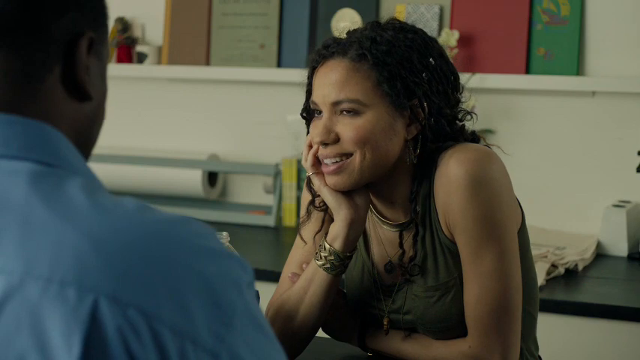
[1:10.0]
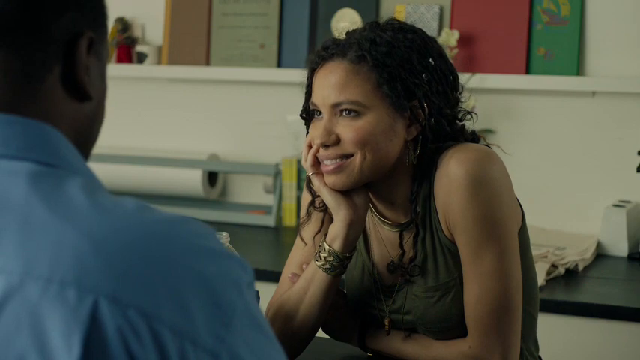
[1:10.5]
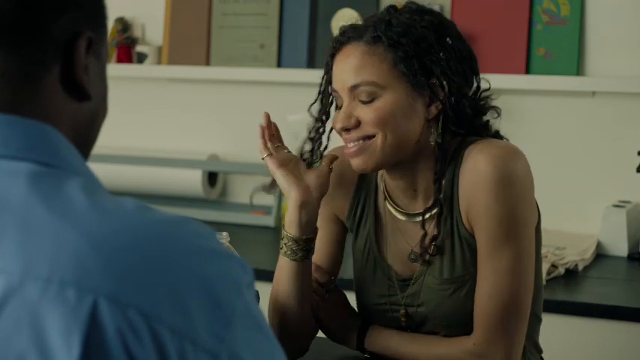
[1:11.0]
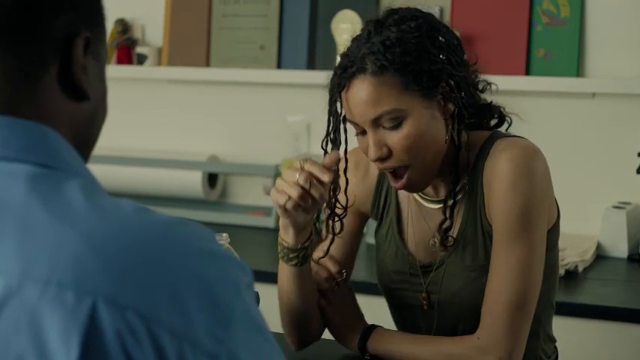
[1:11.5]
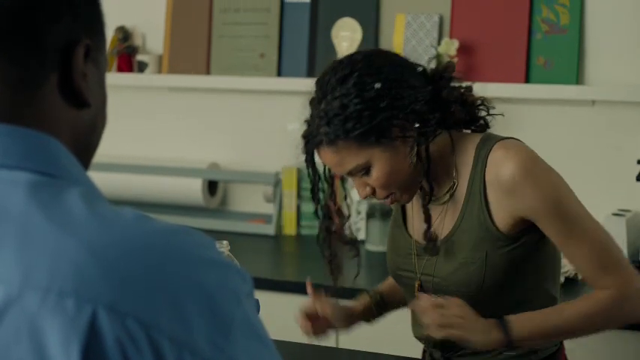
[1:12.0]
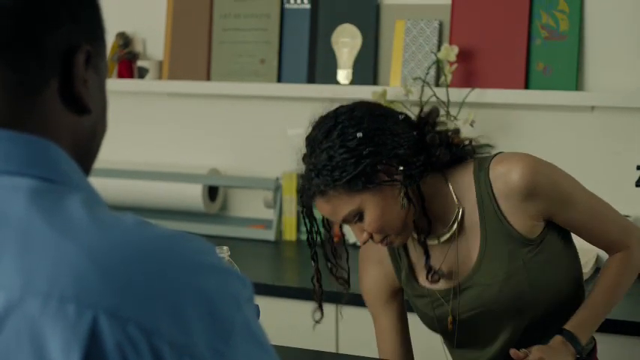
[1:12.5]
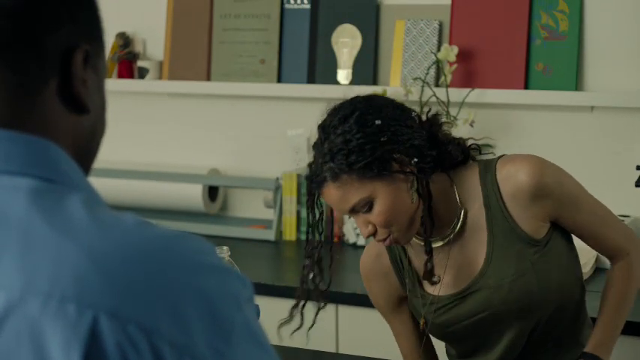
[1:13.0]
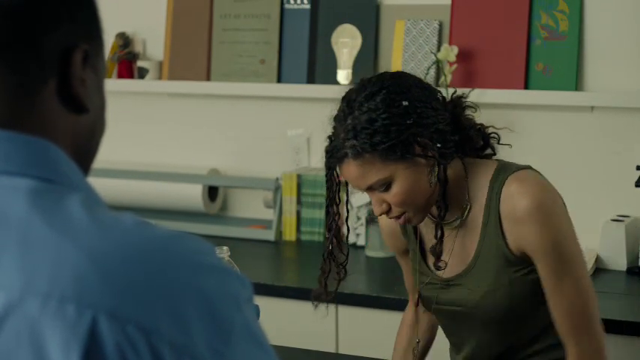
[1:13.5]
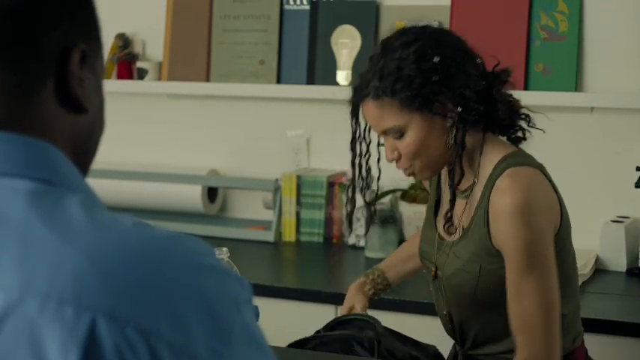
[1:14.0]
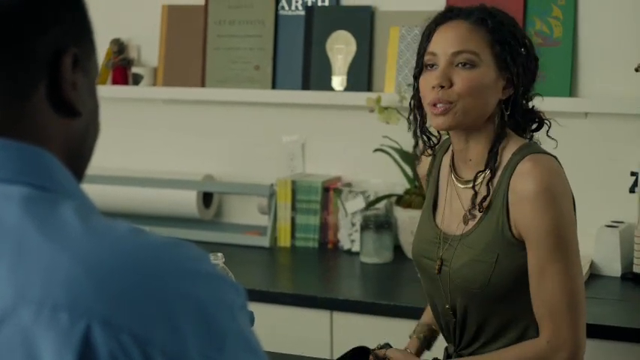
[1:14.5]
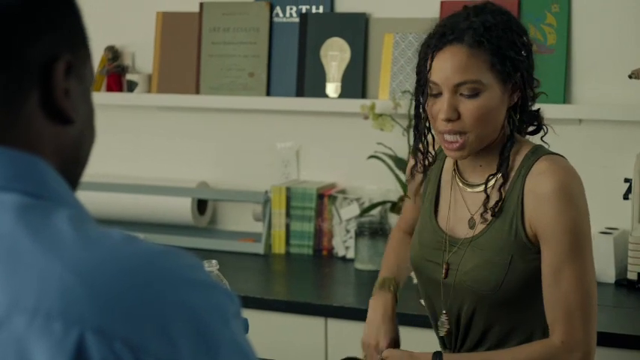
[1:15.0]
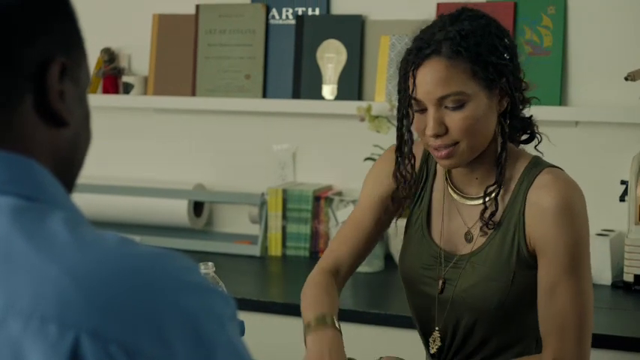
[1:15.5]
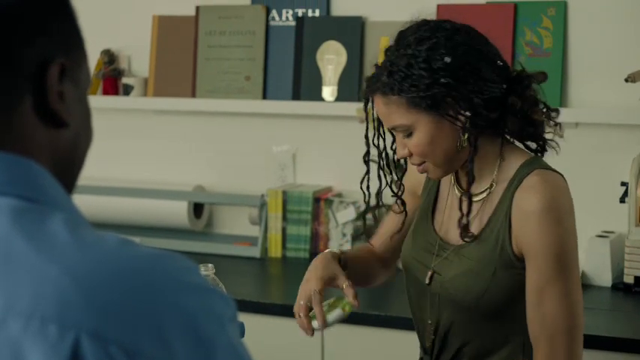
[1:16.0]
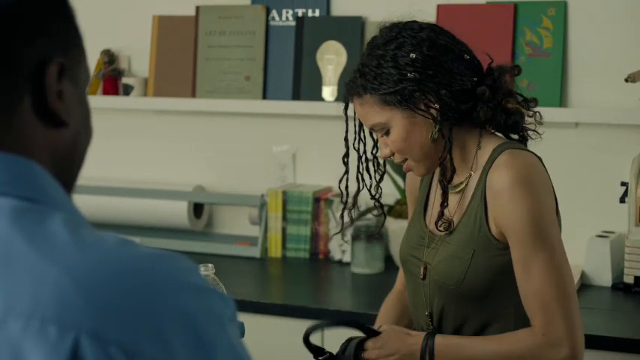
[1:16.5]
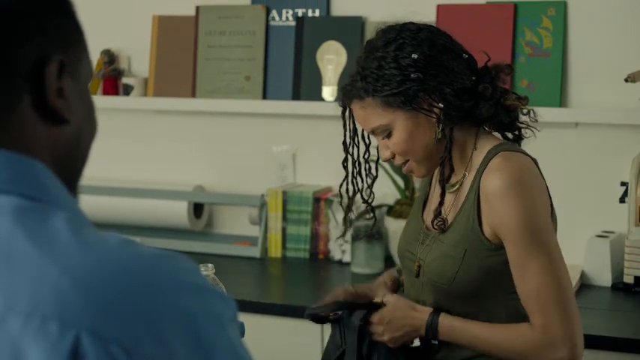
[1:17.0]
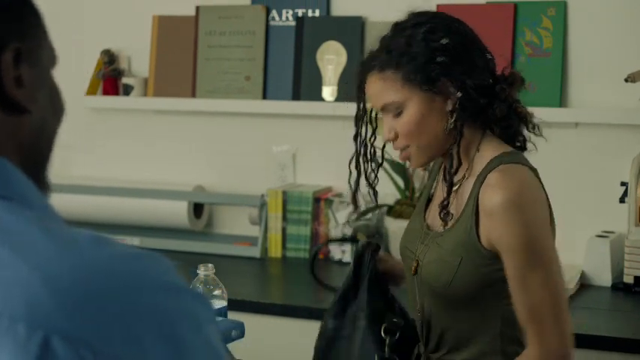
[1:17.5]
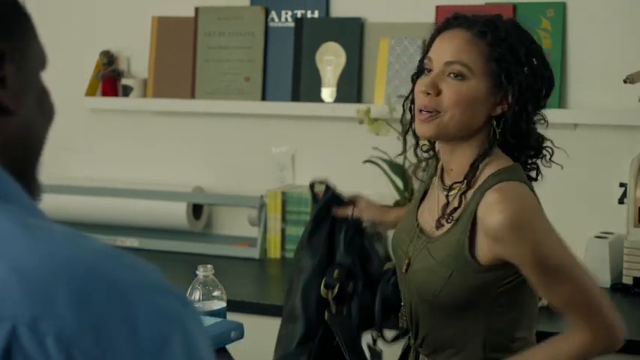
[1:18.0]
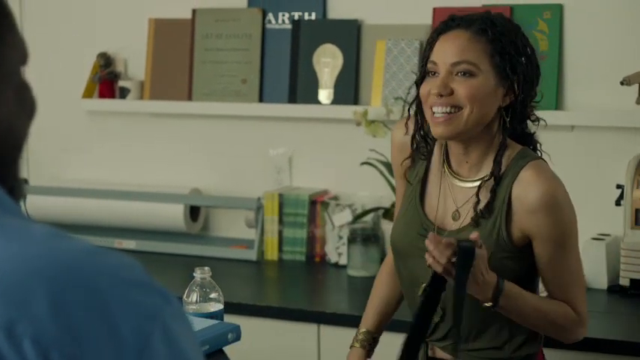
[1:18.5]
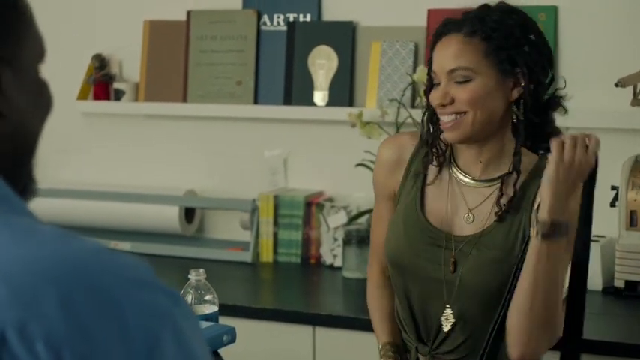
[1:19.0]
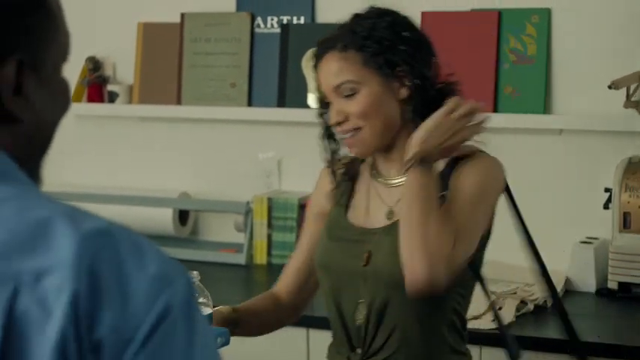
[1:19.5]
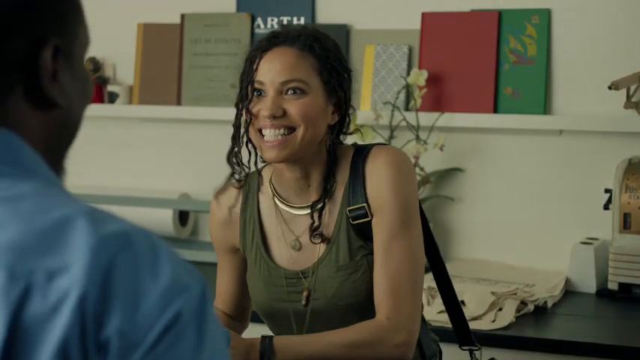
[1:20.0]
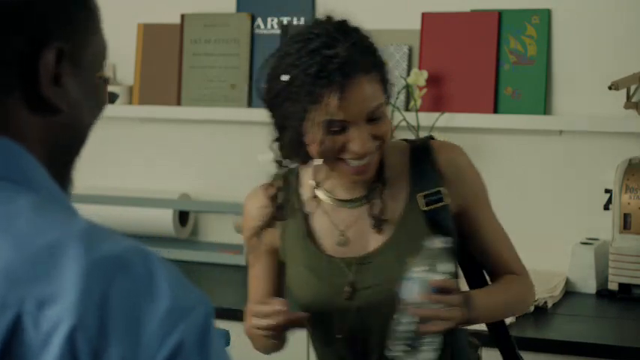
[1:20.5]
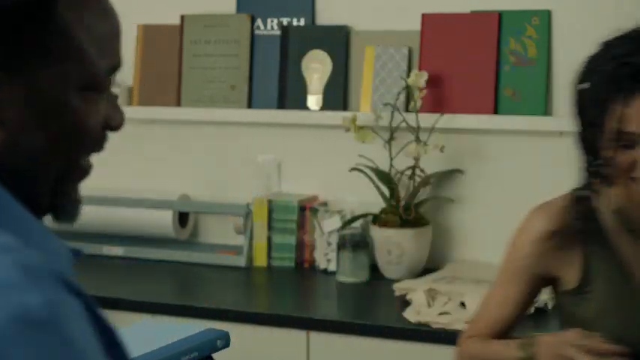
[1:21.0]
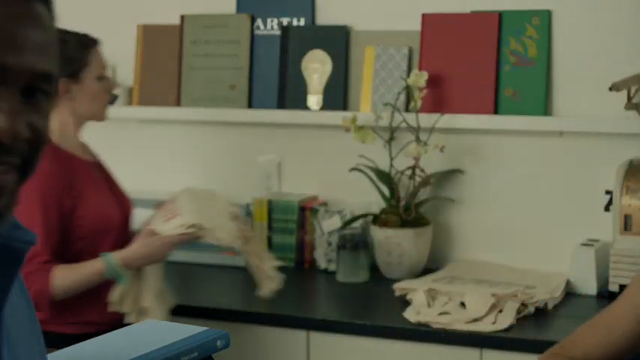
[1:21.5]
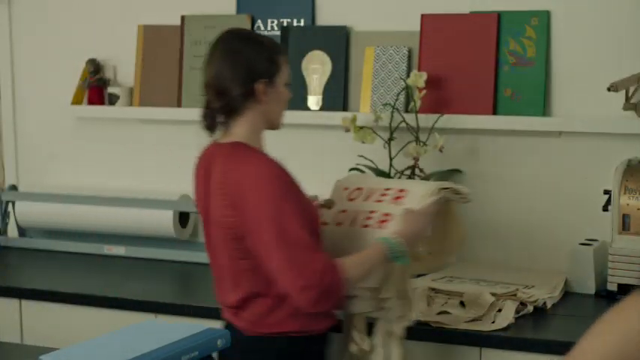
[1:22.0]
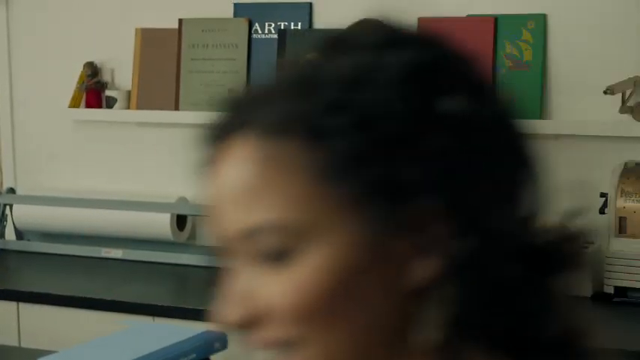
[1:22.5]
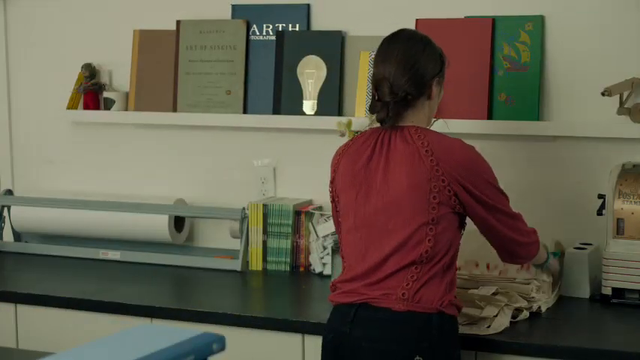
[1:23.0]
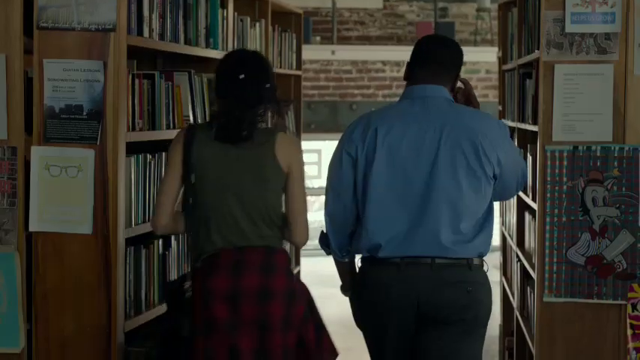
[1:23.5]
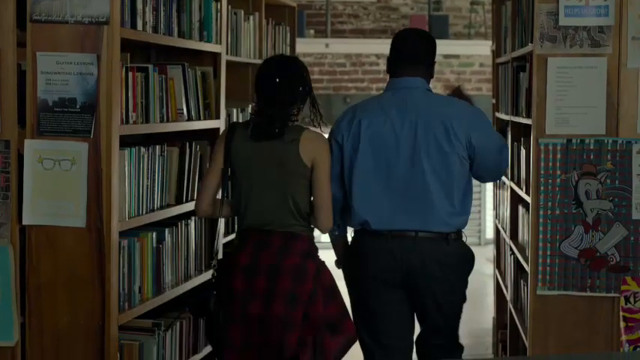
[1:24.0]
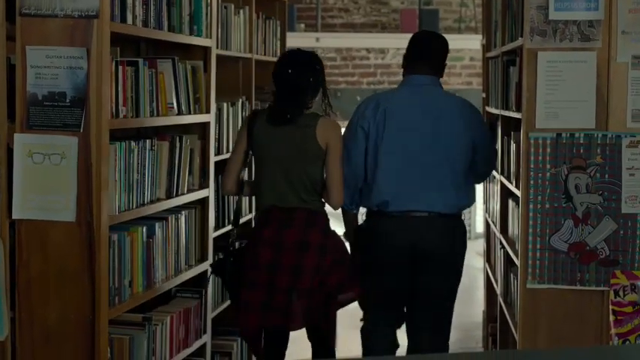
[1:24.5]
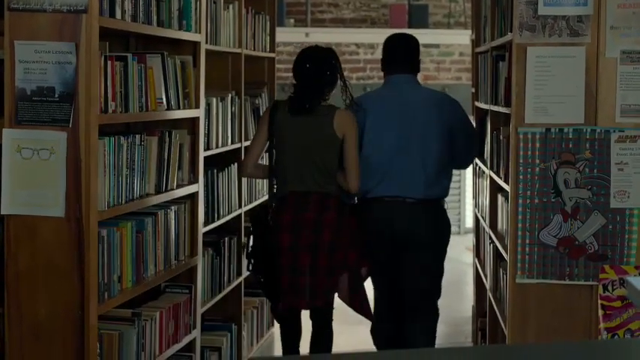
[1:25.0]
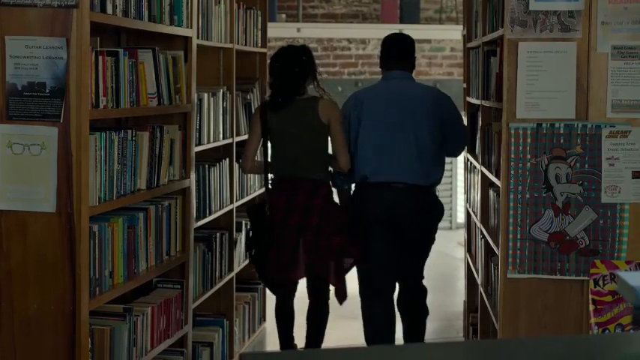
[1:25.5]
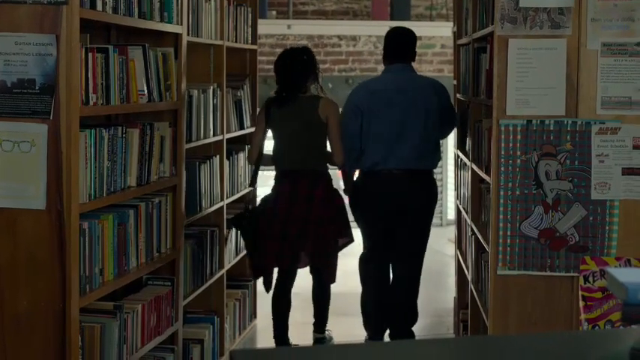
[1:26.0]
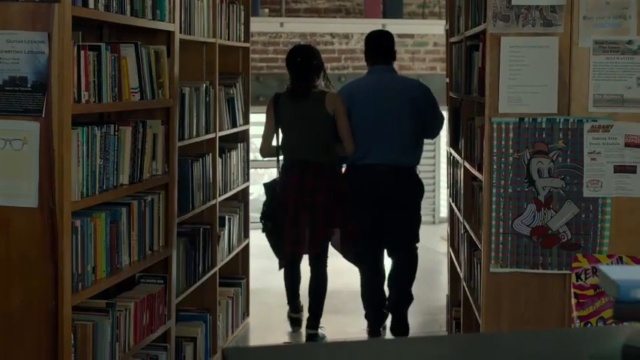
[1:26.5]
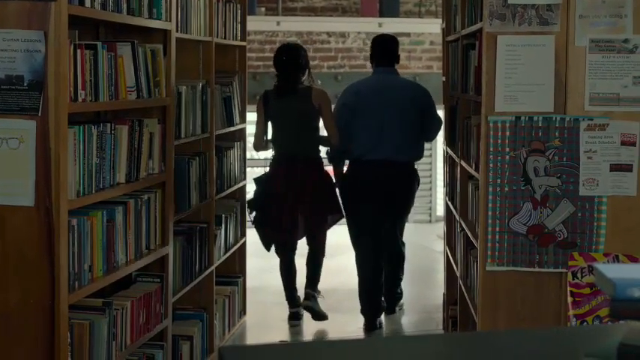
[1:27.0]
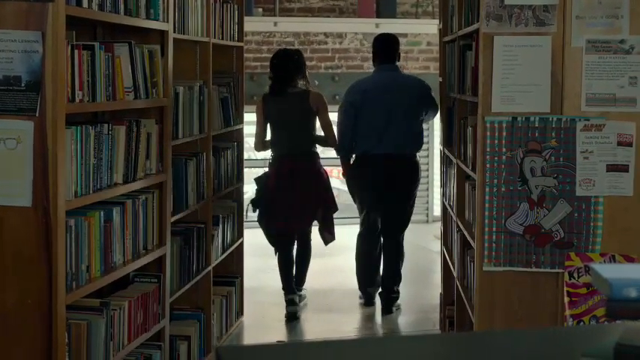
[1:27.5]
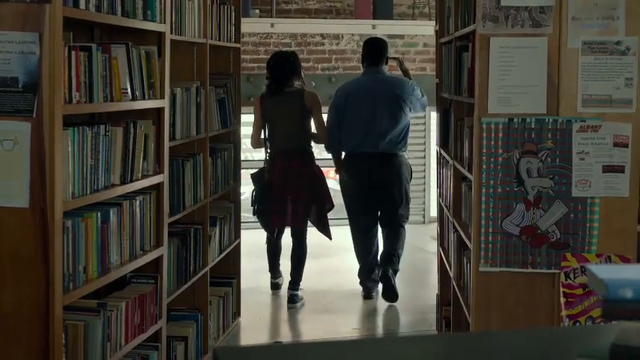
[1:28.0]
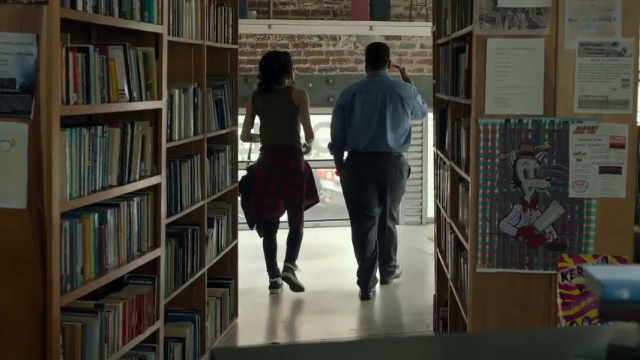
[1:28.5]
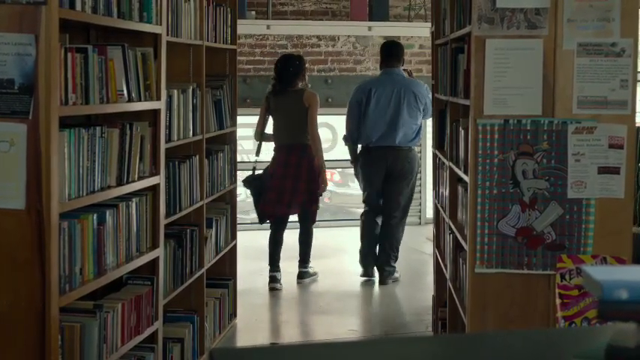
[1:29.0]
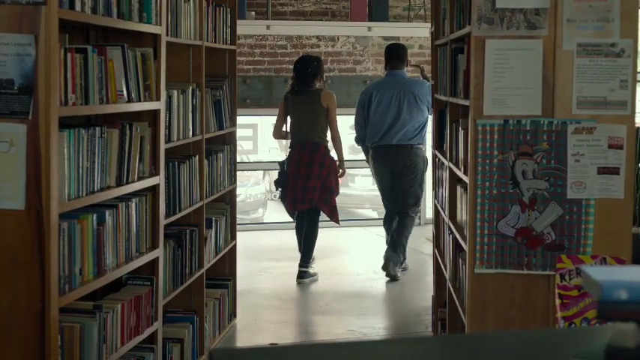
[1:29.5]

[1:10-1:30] A Black woman in a dark green tank top, with long braided or dreadlocked hair, is pretty much in the center, resting her chin in her hand, with her elbow apparently resting out of frame on a table below. On the left side is the back right portion of a Black man in a light blue dress shirt, whom she is smiling at. Smiling and talking to him, she reaches under the table, pulls out her bag, puts the green circular item in it, smiles at him, grabs her cup and walks to the left, away from the desk. In the next shot, both walk away from the camera, him on the right and her on the left, between two extremely tall bookshelves whose tops cannot be seen. They reach the end of the row and turn right. At the back, beyond the bookshelves, is a brick wall above a window that spans the entire width visible between the two bookshelves.